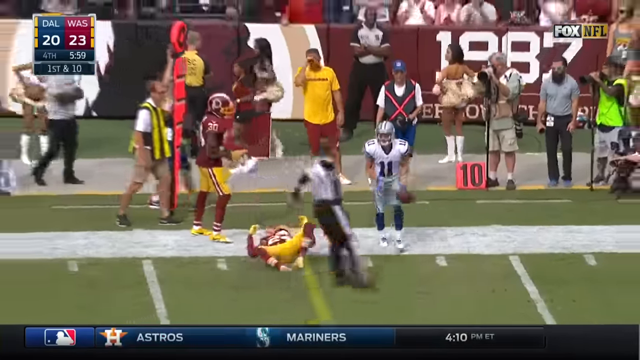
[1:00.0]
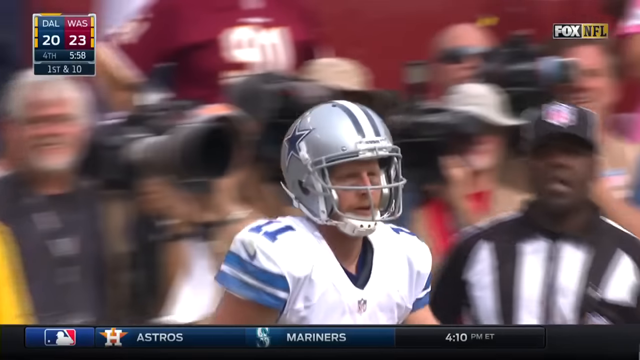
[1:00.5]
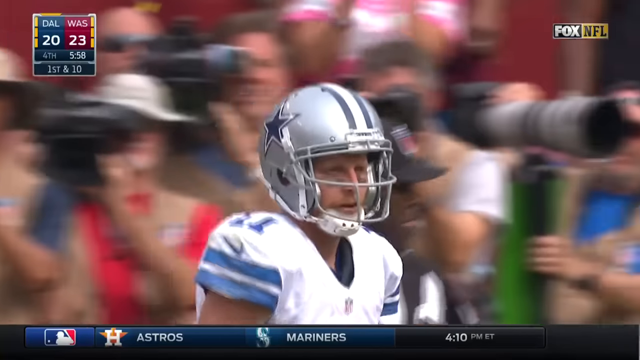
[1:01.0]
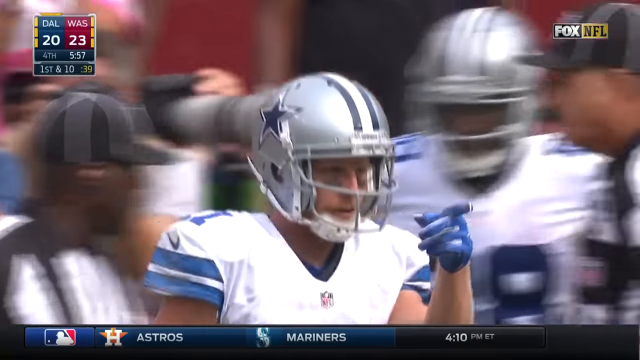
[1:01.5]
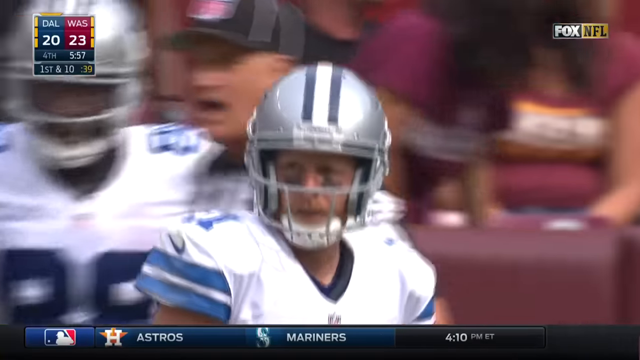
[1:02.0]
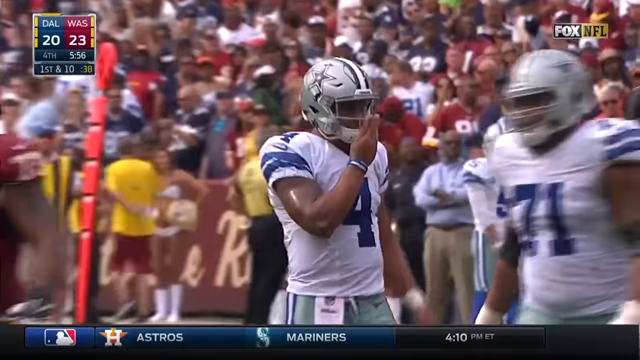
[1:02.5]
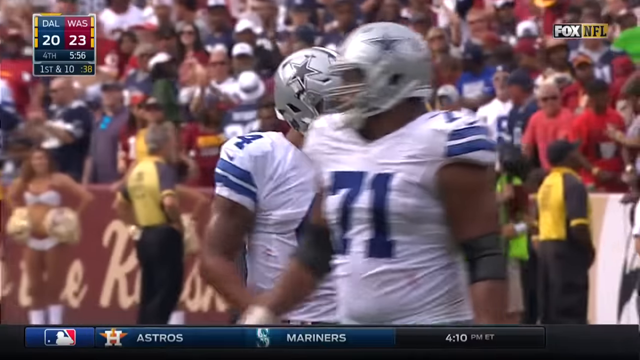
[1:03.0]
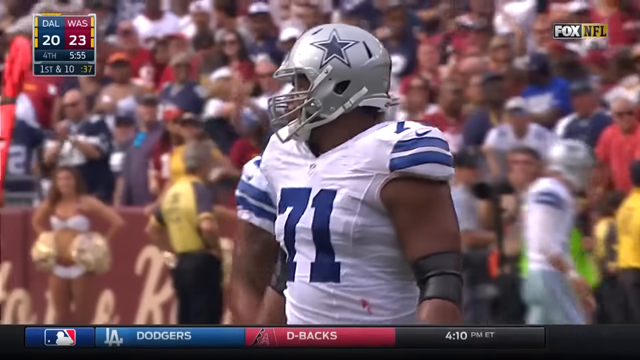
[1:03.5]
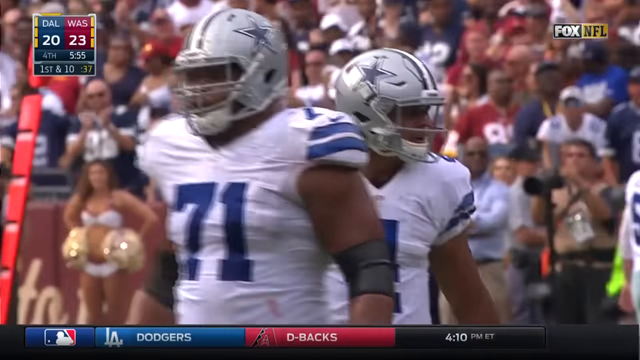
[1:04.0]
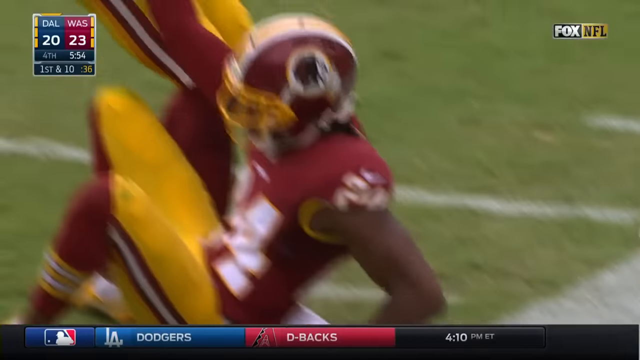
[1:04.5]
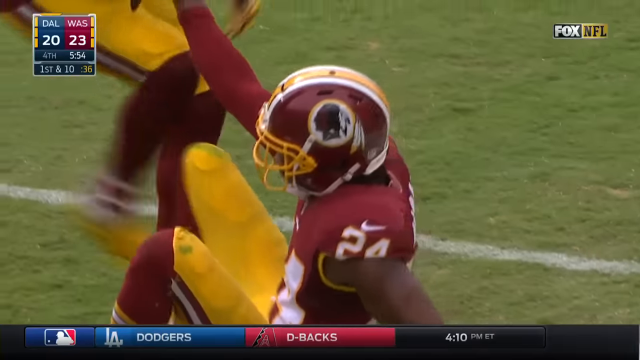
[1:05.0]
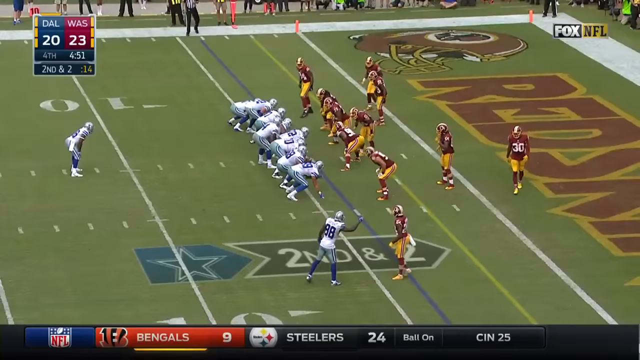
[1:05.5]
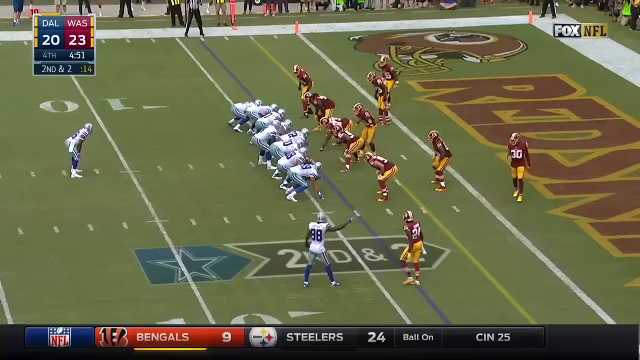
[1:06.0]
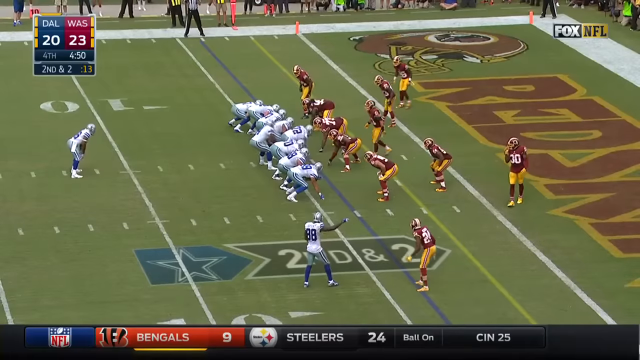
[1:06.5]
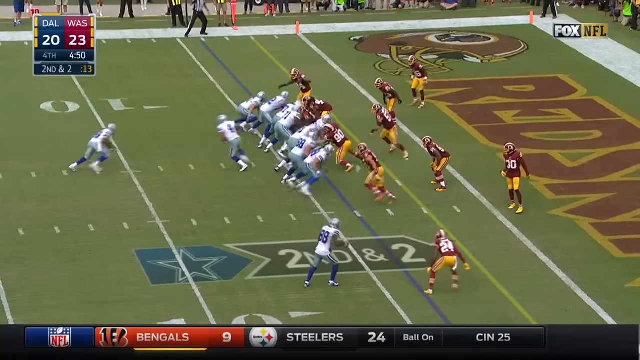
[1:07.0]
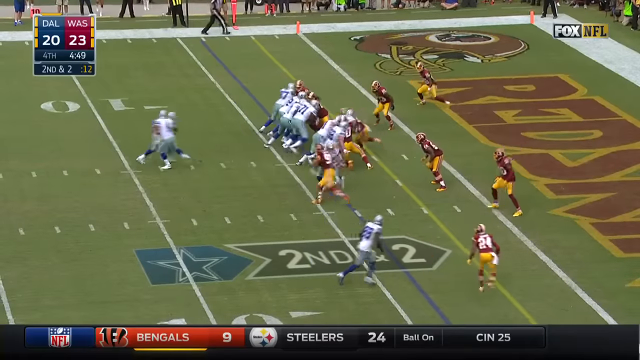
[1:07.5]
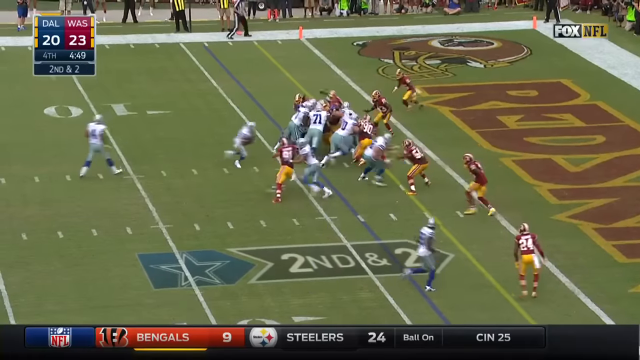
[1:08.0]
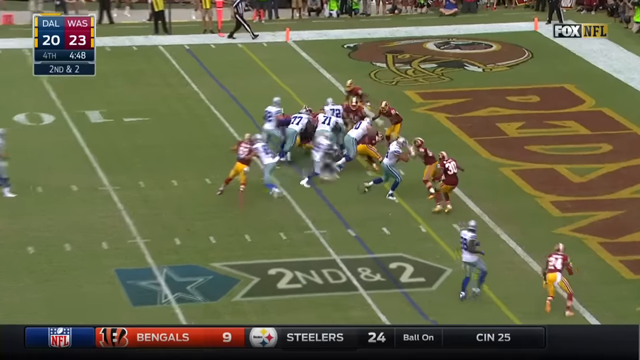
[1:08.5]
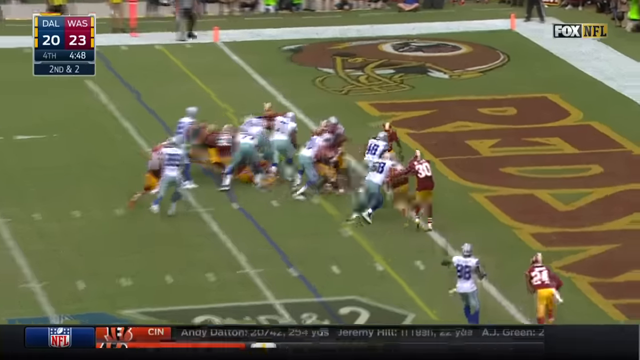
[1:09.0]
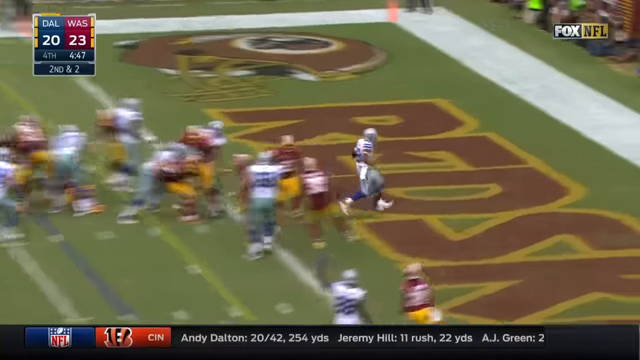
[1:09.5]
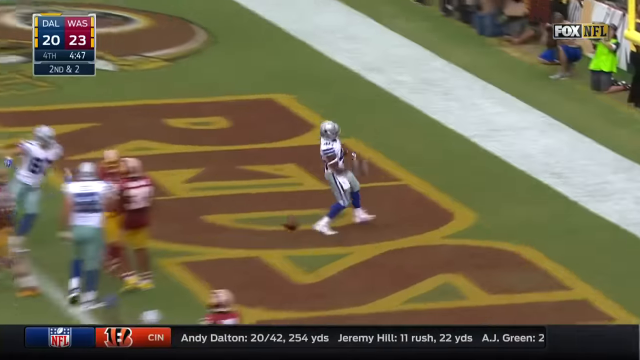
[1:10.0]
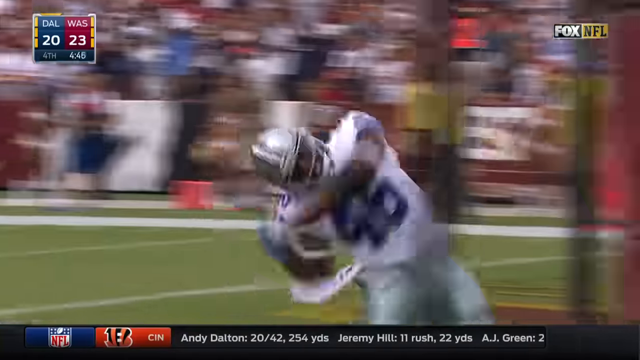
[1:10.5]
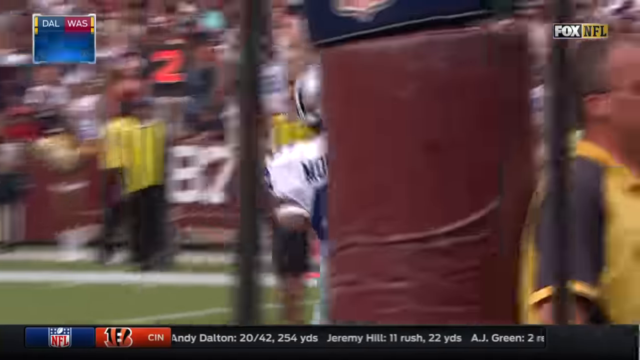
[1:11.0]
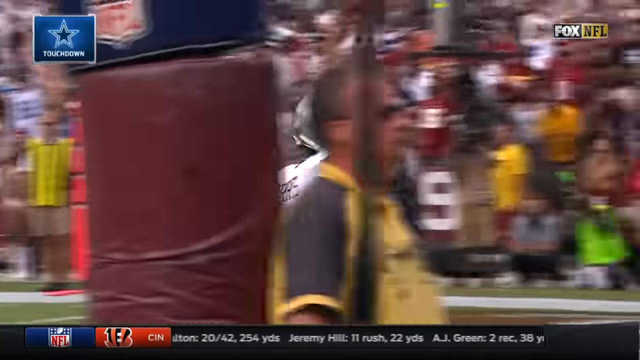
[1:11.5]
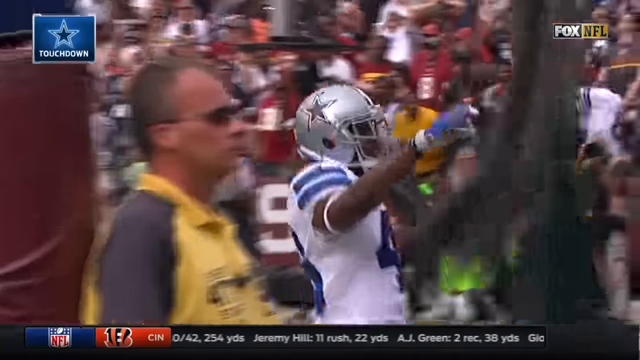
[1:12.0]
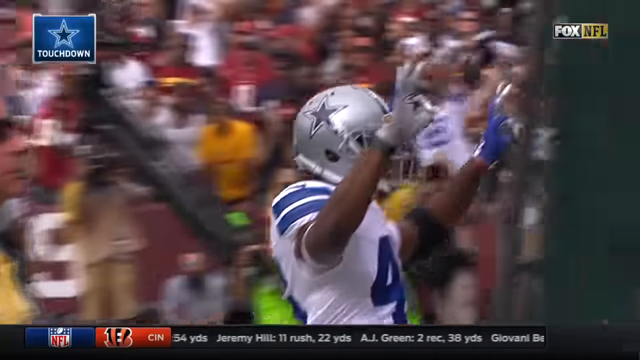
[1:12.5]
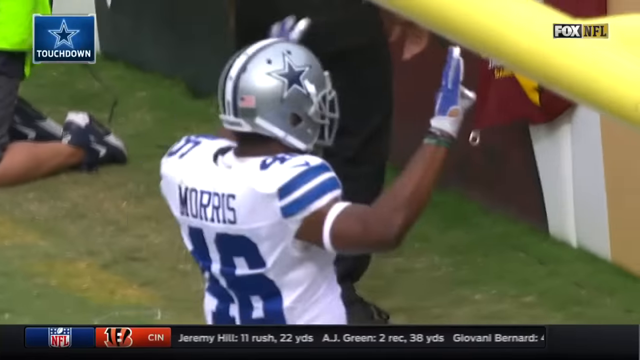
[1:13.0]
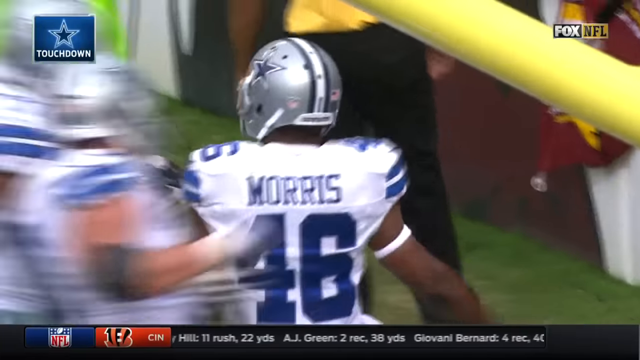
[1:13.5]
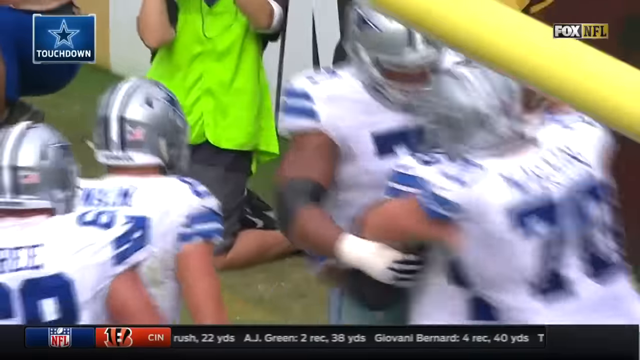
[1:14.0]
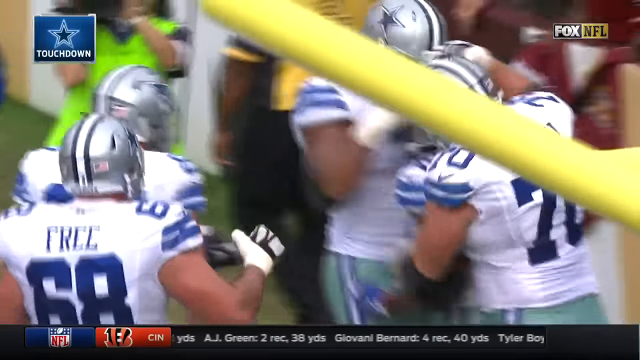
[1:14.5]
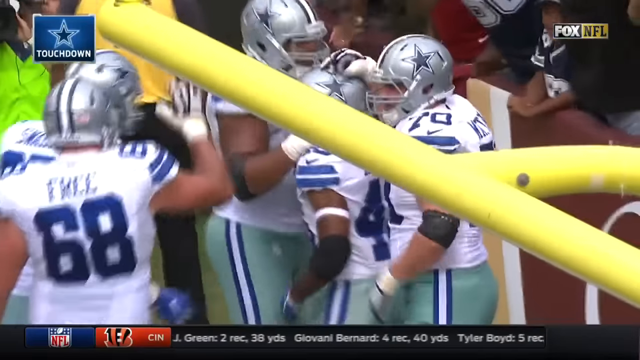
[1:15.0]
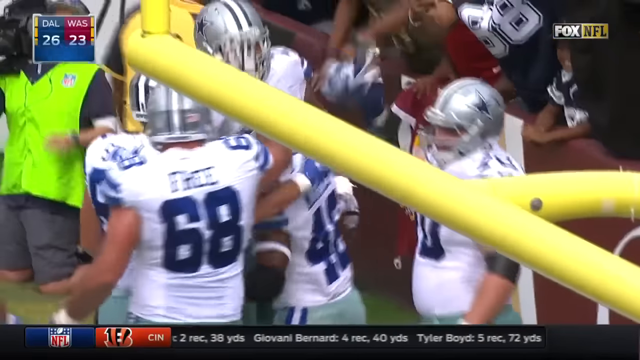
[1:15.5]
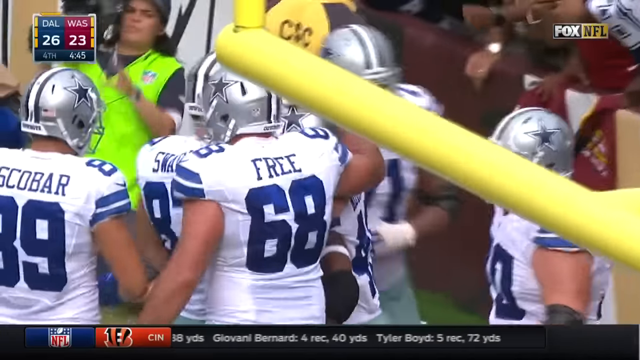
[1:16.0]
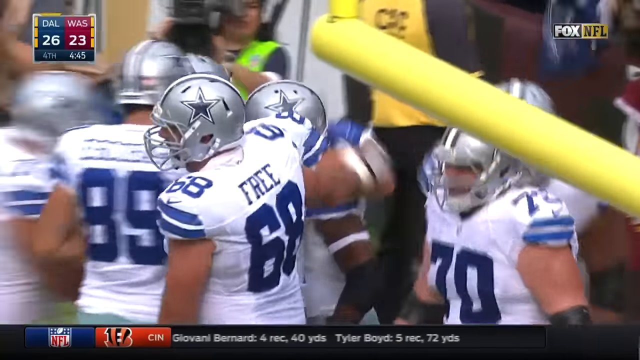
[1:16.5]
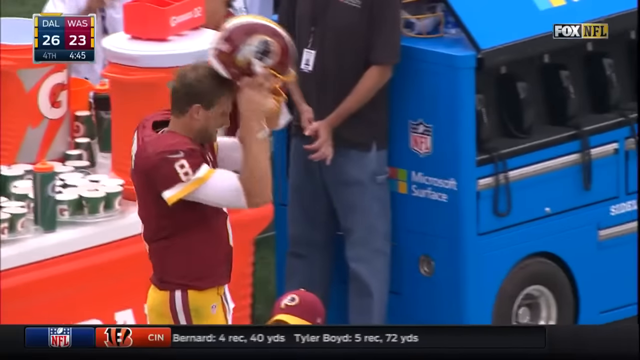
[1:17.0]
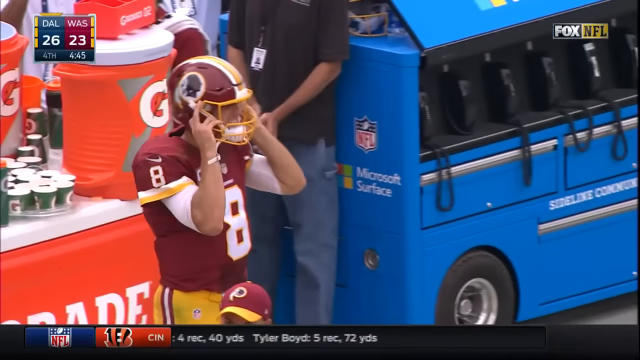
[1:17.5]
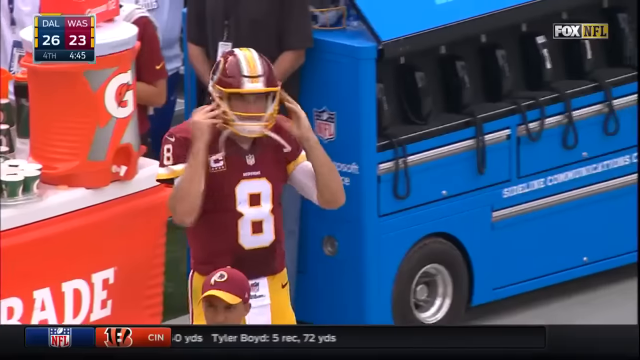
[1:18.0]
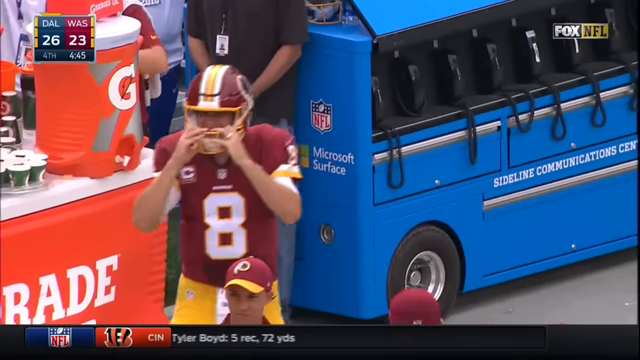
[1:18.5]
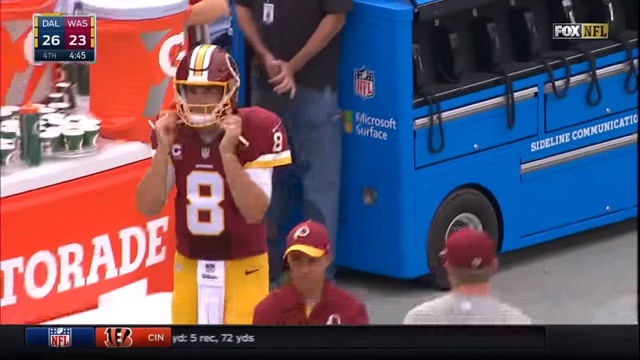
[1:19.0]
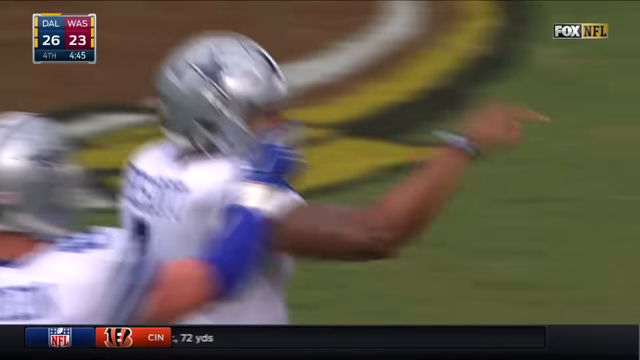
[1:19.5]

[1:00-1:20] The Dallas players are Cowboys, identifiable by the star on the side of the helmet. A close-up shows a player from about the chest up, apparently number 11. Various cameras are behind him, apparently belonging to people recording the game. He walks from the left side of the screen toward the right. The shot cuts to number 71 on the Cowboys, walking from the right side of the screen to the left. It then cuts to the Redskins, where one player helps up another player lying on his back on the ground. Next it cuts to a play with Dallas on offense: the quarterback is just behind the 10-yard line, with the end zone on the right, and the players are lined up around what appears to be the four-yard line. The ball is snapped and it is caught successfully in the end zone. The players continue and celebrate, and the player who caught the ball shows his appreciation to the crowd.